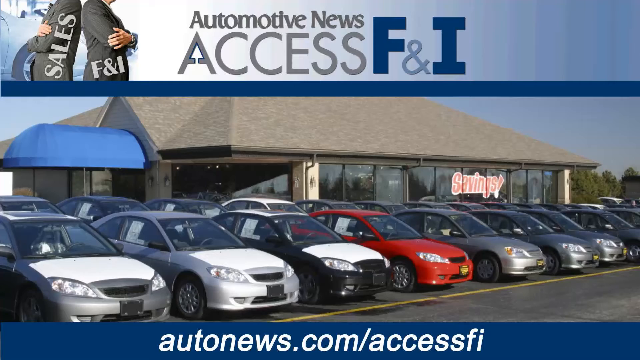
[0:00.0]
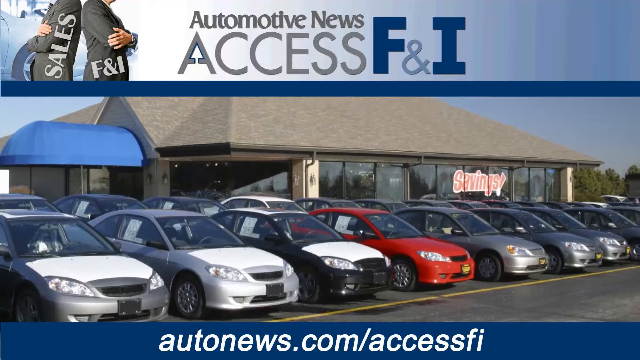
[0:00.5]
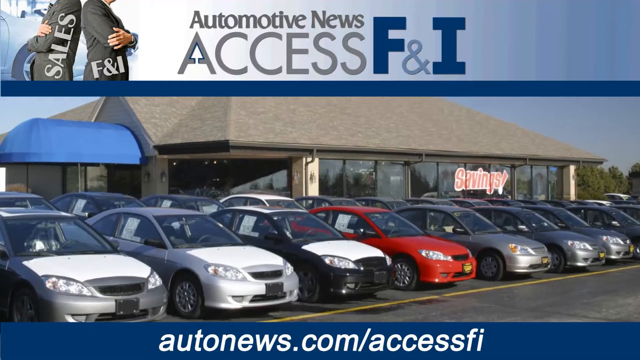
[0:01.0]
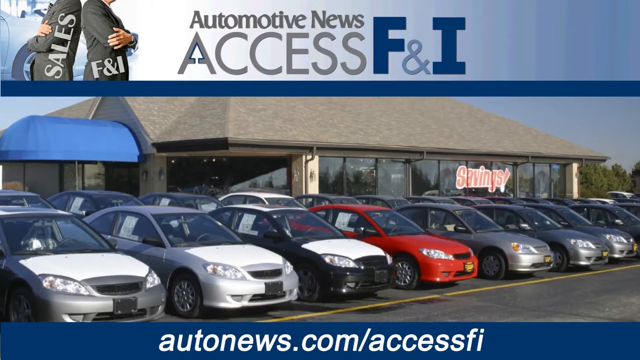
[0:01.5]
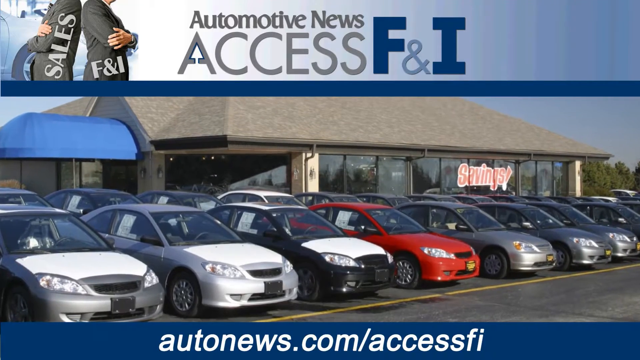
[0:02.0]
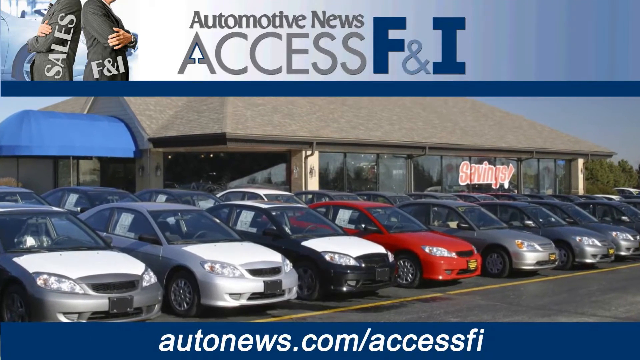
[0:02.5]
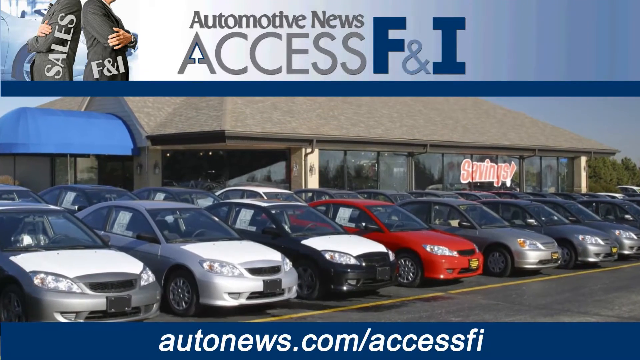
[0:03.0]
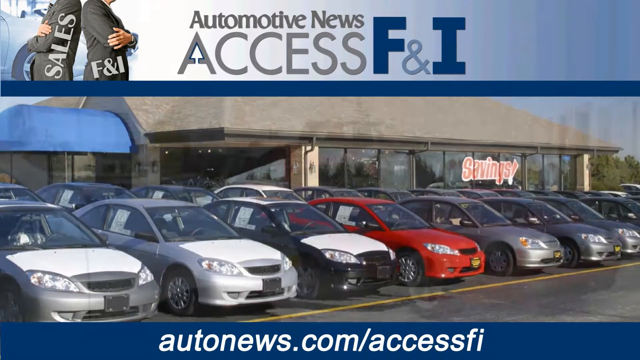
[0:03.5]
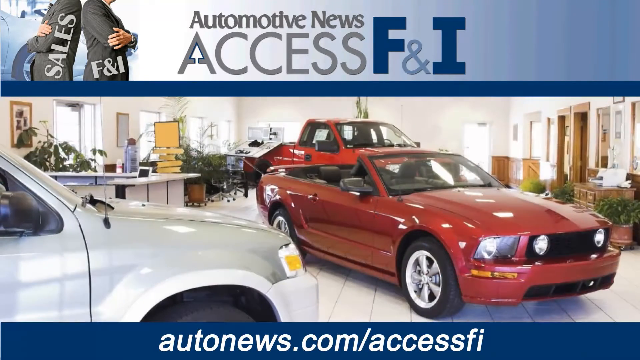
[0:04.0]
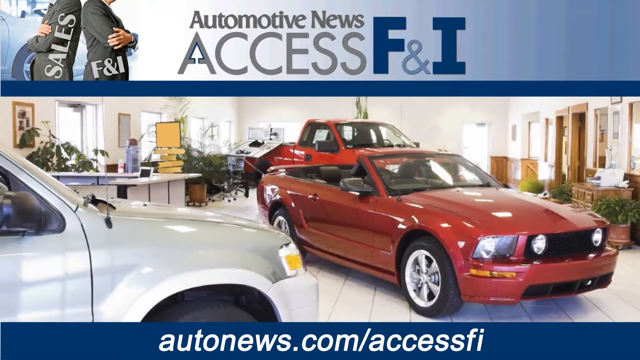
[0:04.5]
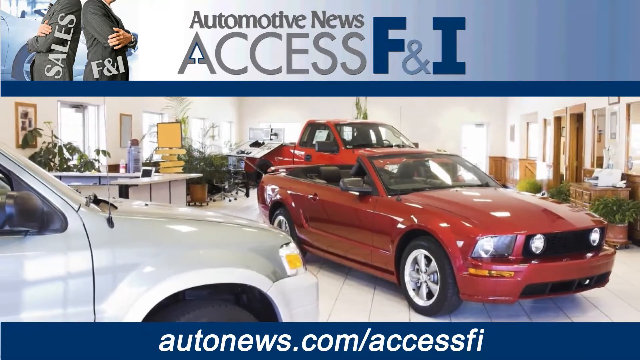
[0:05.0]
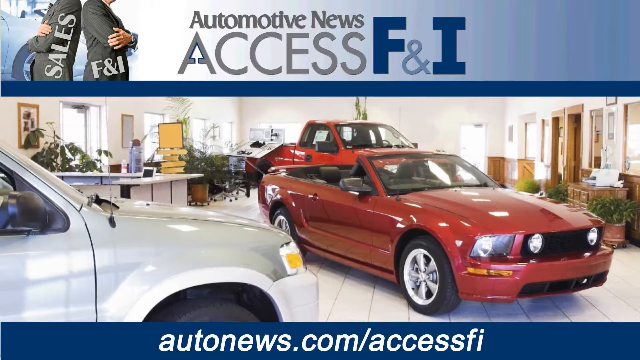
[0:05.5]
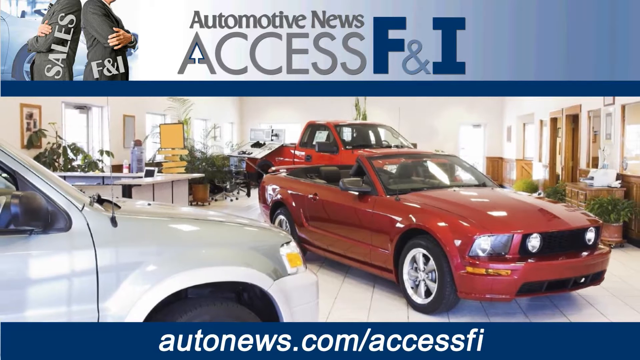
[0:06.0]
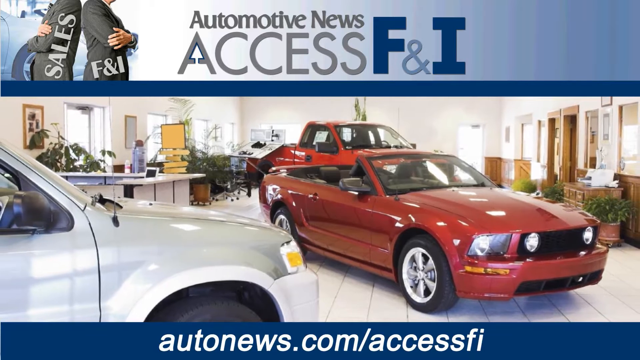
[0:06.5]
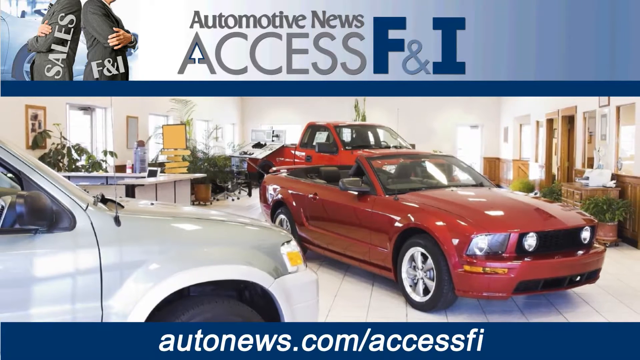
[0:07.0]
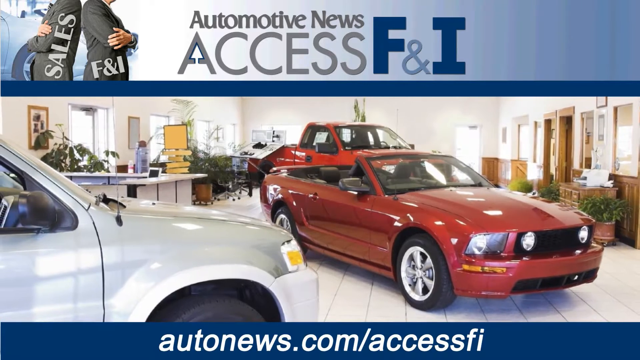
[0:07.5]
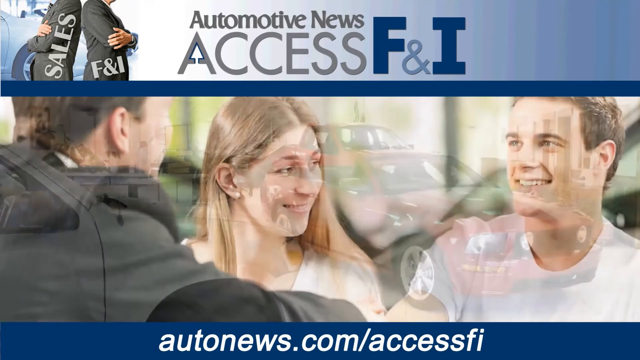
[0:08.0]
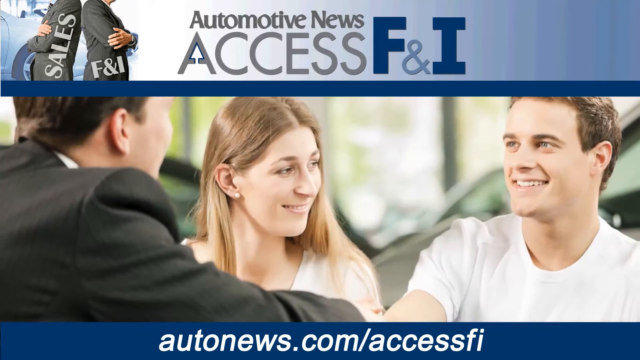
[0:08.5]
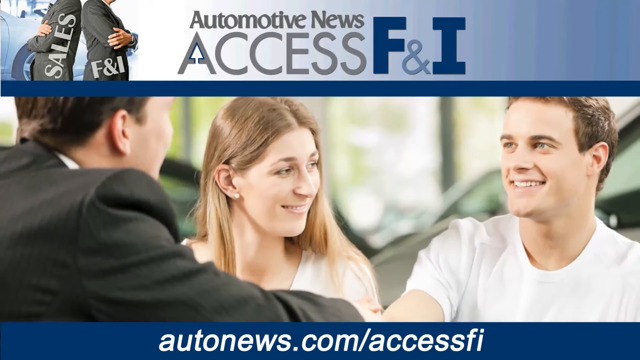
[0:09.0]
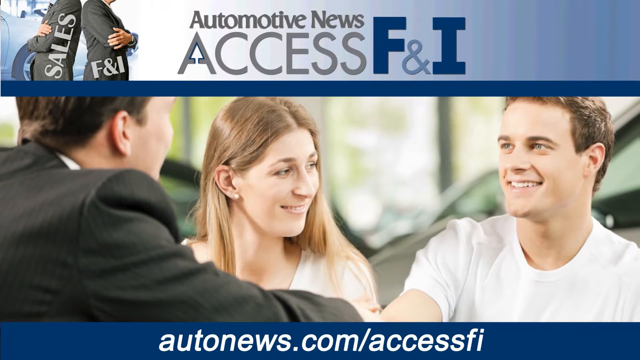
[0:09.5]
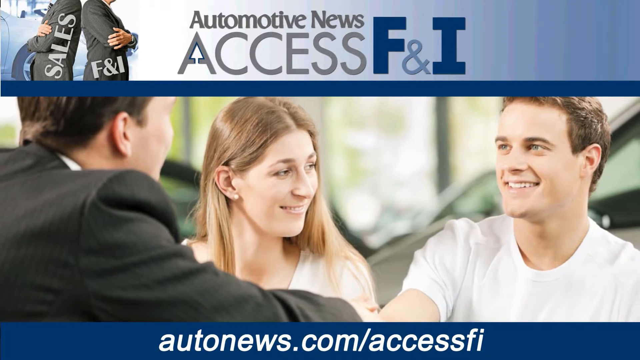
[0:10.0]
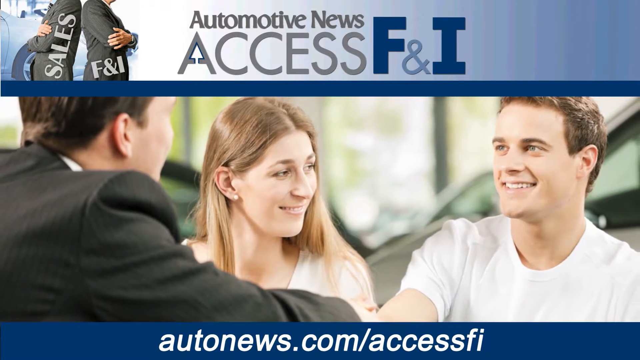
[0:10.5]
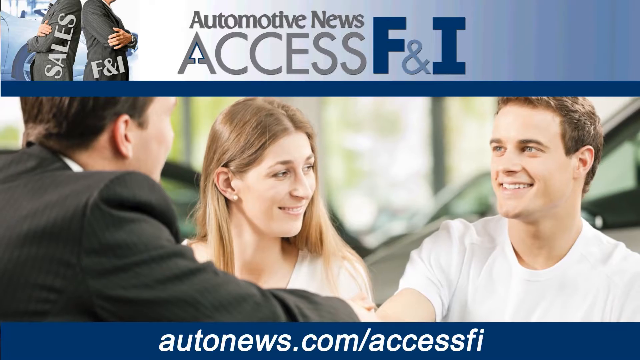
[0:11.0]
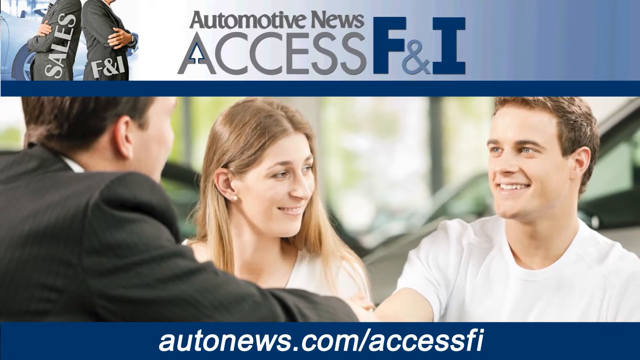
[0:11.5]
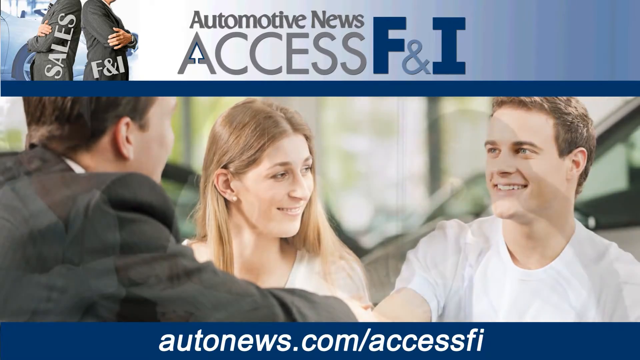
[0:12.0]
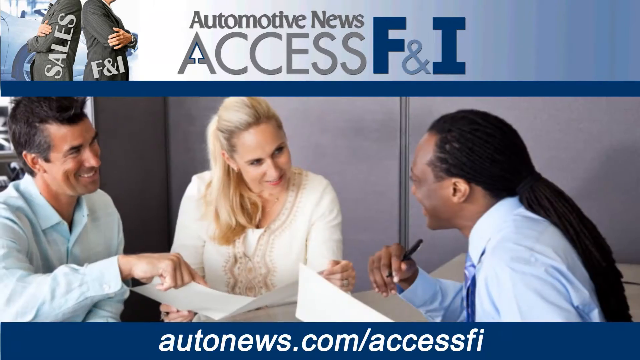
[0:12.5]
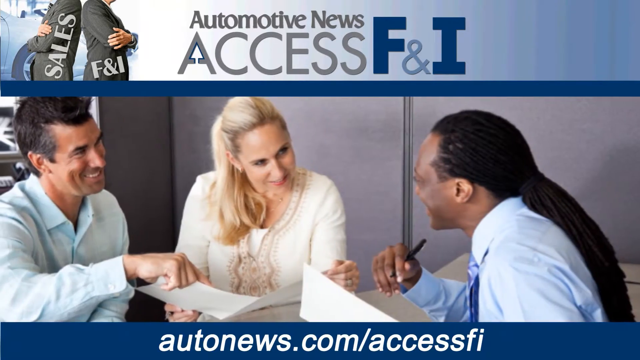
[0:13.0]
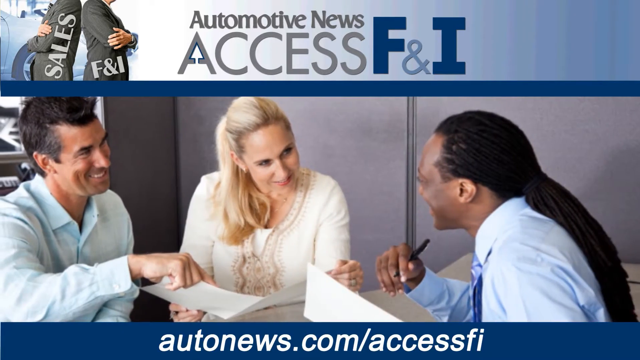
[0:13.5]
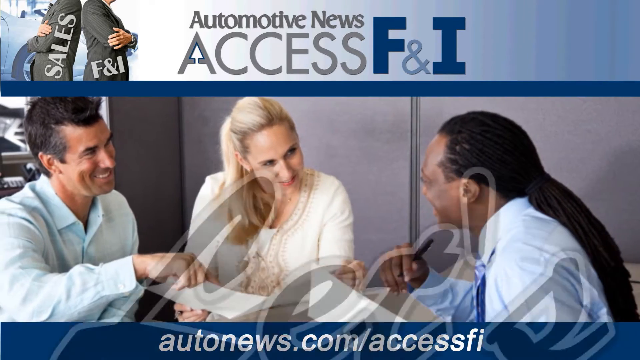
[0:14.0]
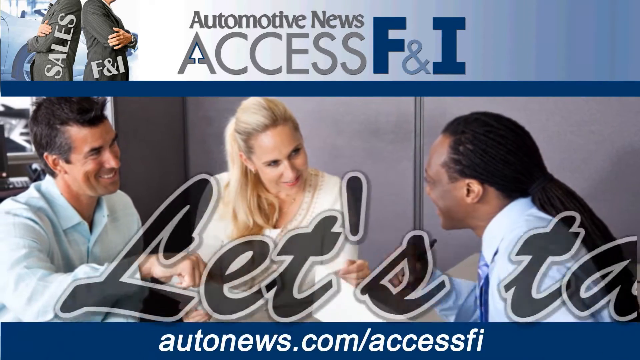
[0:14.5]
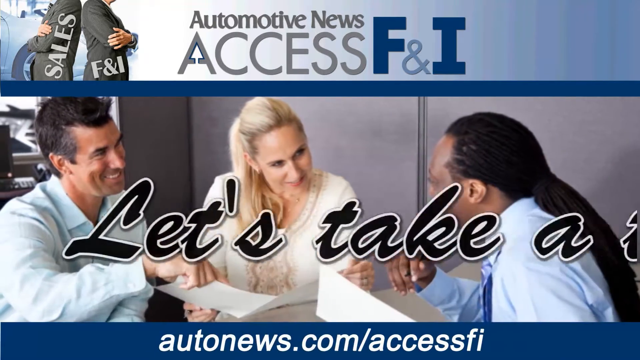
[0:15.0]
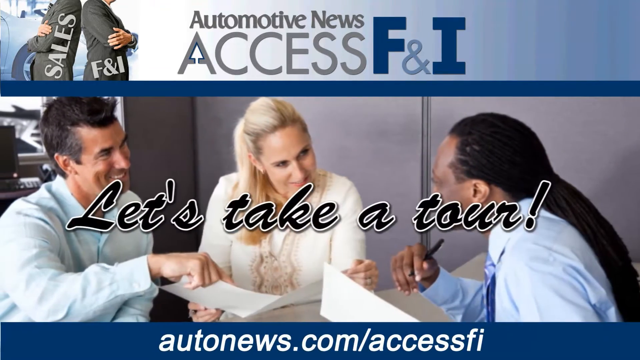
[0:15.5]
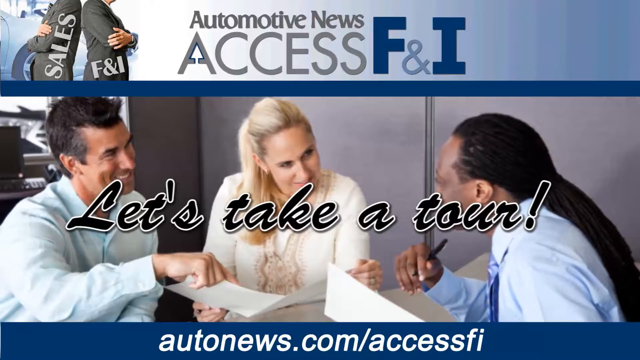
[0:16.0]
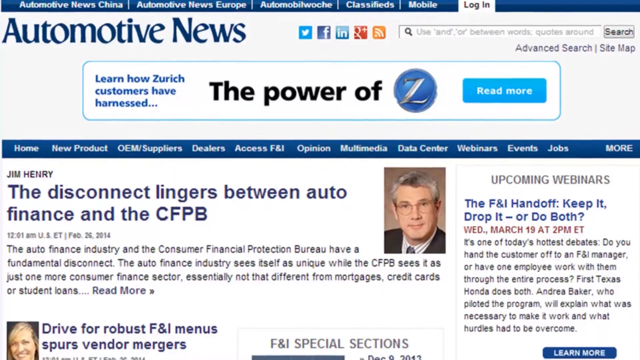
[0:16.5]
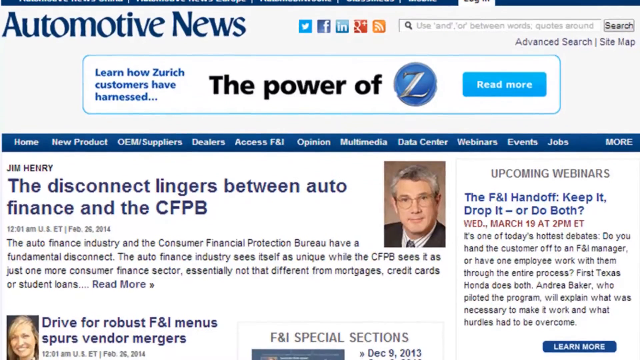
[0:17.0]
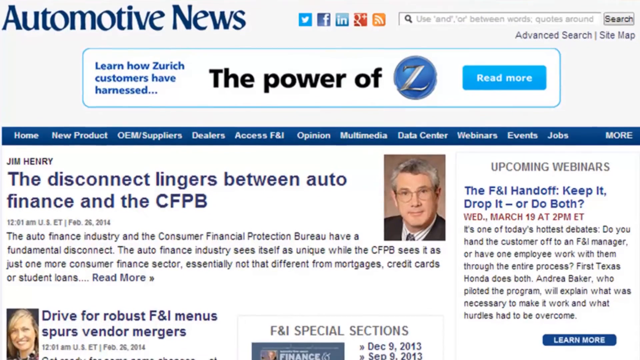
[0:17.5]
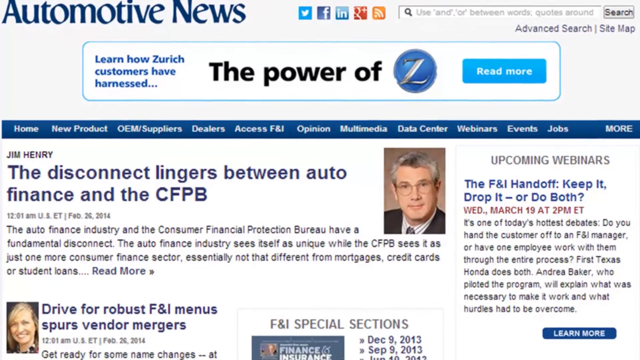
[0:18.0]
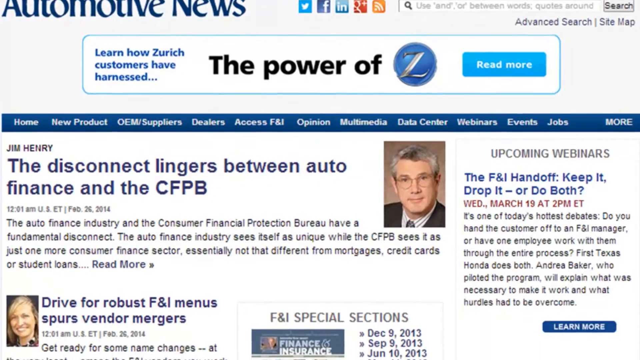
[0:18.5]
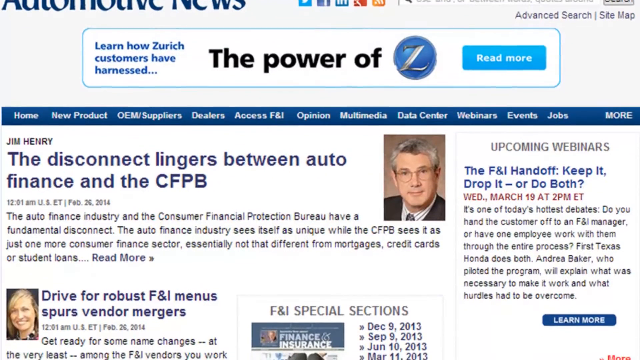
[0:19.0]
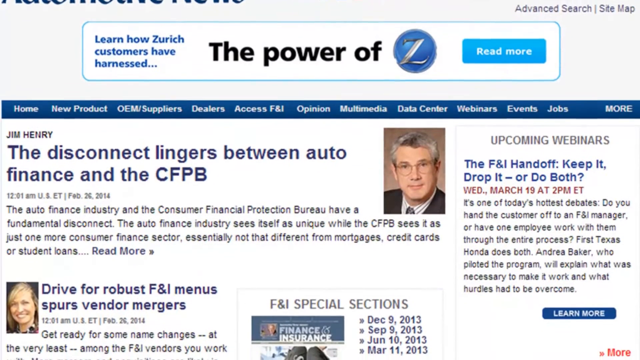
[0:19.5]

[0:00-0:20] A header in gray and blue lettering reads "Automotive News Access F&I," with an ampersand between the F and the I. A car lot then appears with several sedans in front of a car sales business. The camera zooms in on the lot while text along the bottom of the image, in white lettering on a blue banner, reads "Autonews.com/Access F&I." Several still images follow, showing the inside of the car lot building and individuals, presumably sitting down, discussing car sales and finance. The scene then switches to a website that is scrolling upwards.